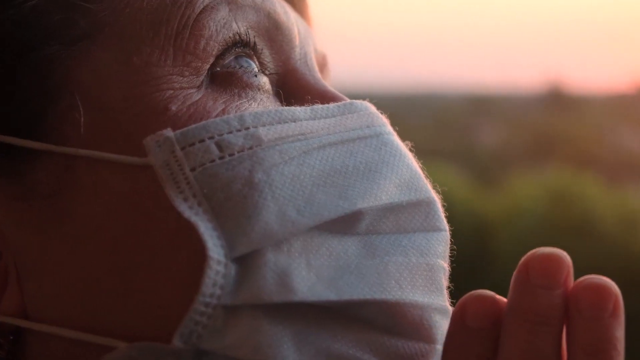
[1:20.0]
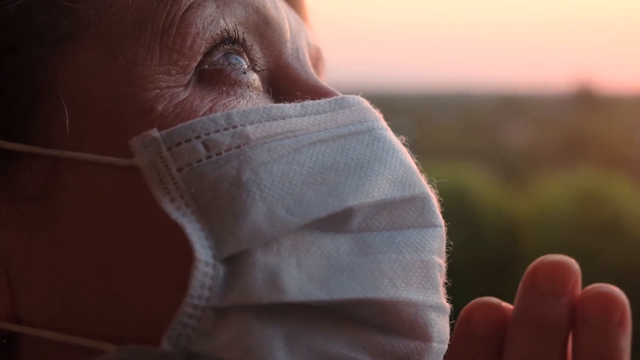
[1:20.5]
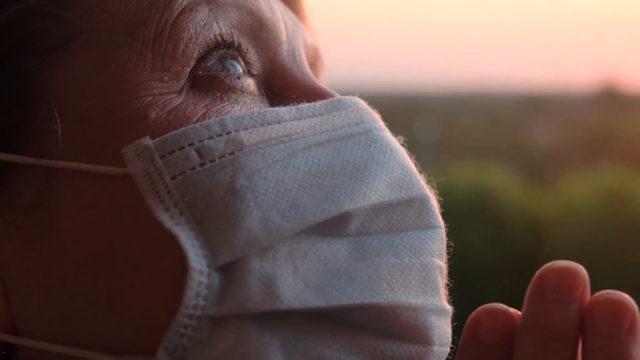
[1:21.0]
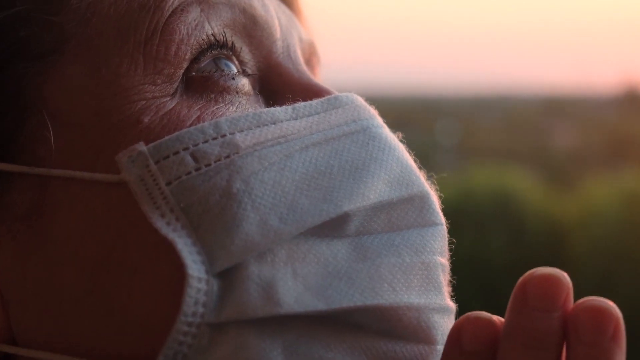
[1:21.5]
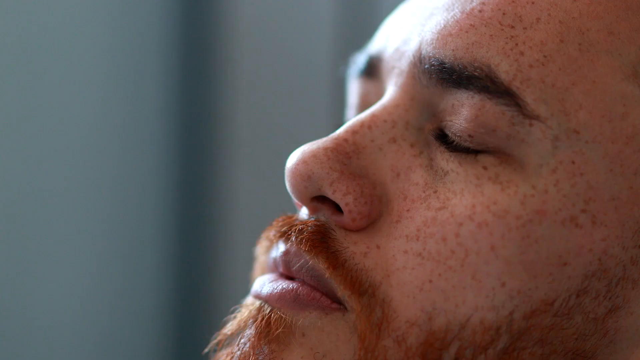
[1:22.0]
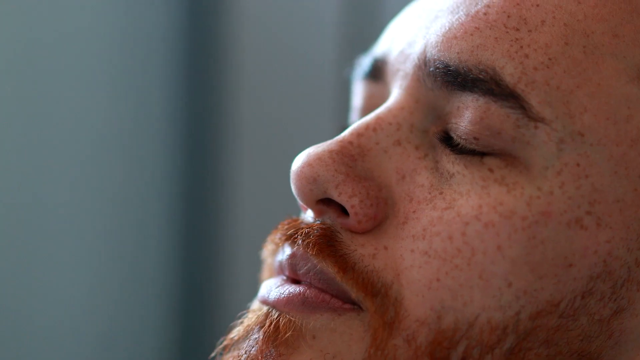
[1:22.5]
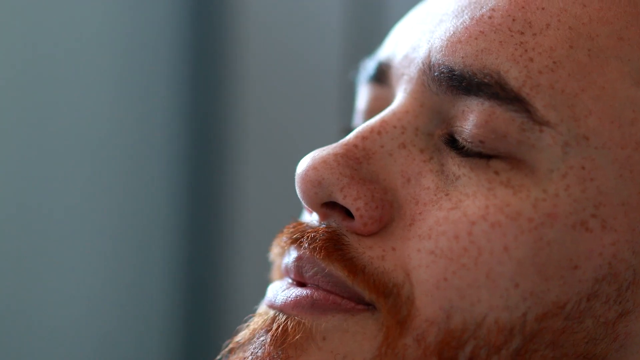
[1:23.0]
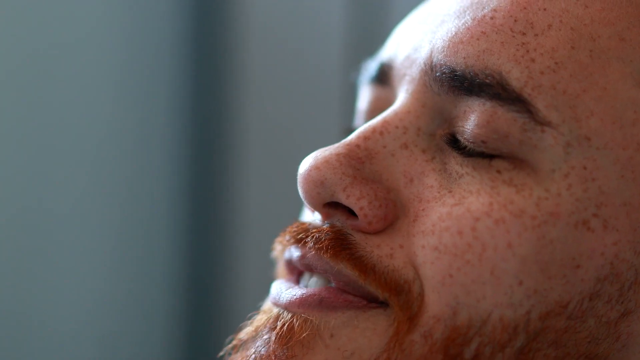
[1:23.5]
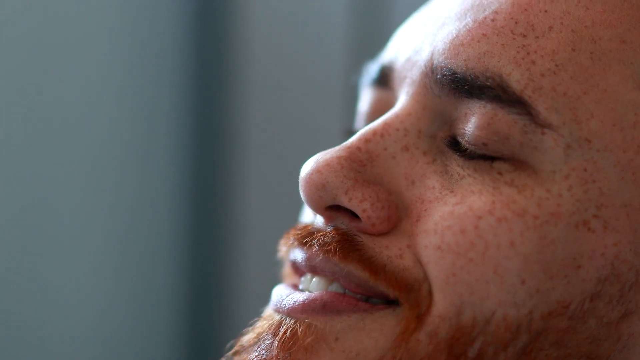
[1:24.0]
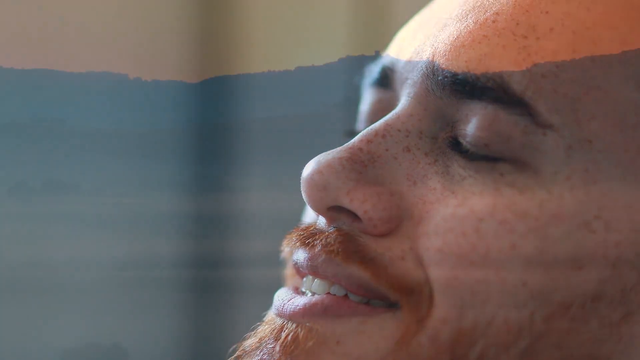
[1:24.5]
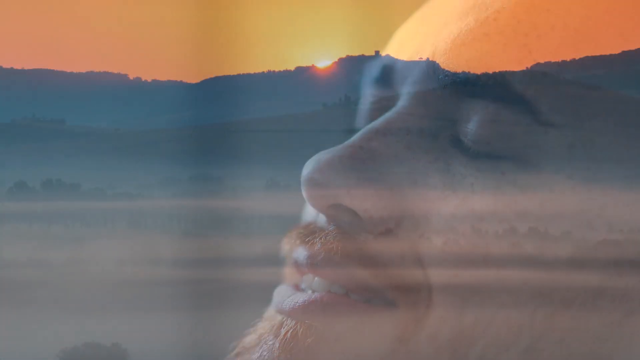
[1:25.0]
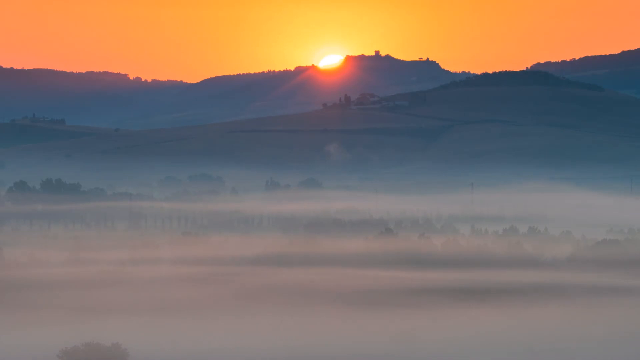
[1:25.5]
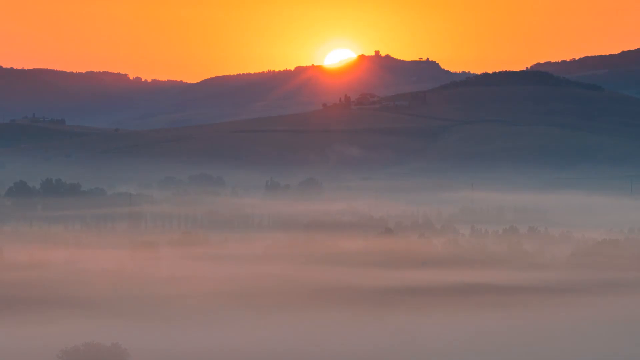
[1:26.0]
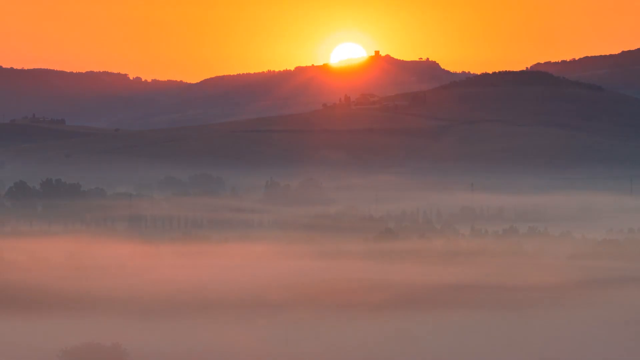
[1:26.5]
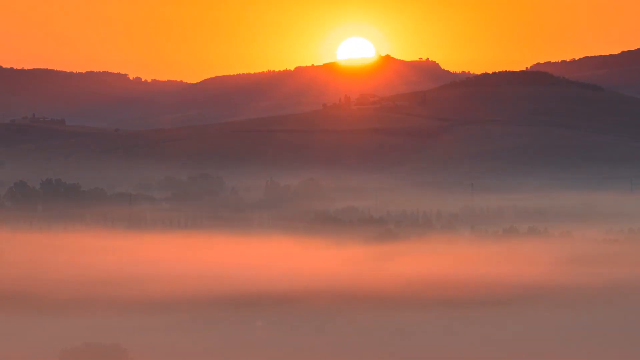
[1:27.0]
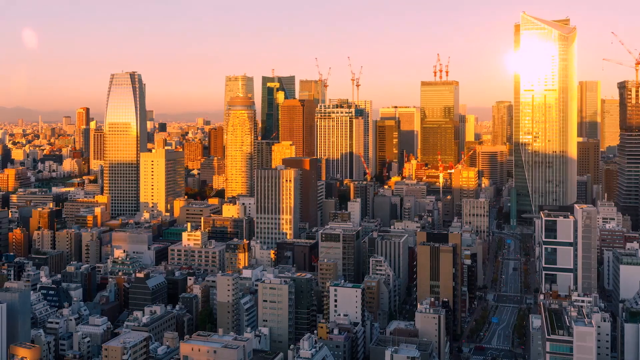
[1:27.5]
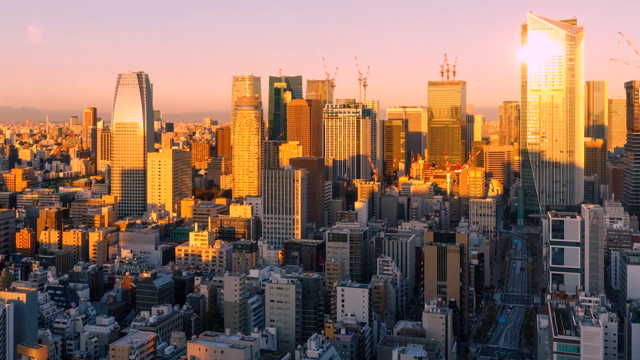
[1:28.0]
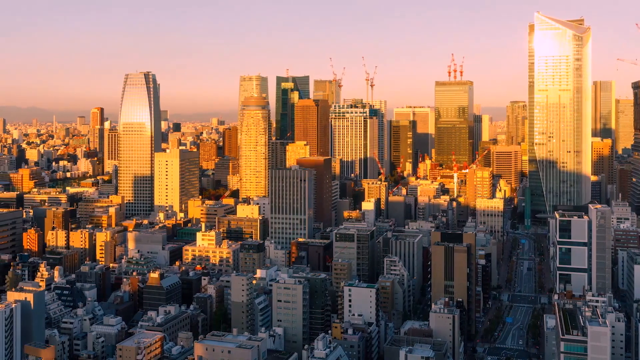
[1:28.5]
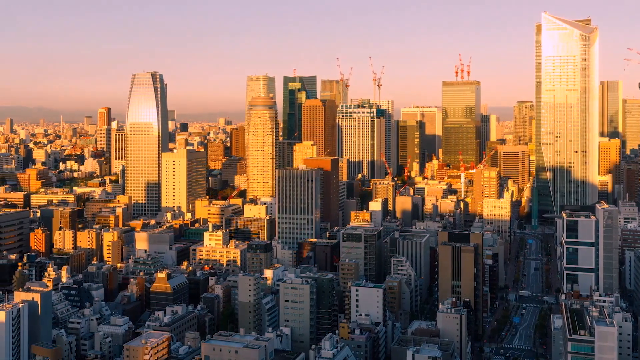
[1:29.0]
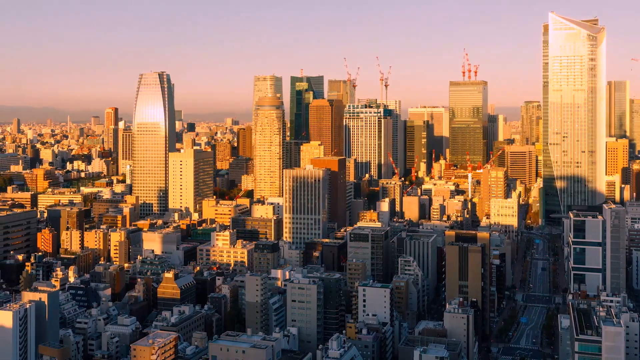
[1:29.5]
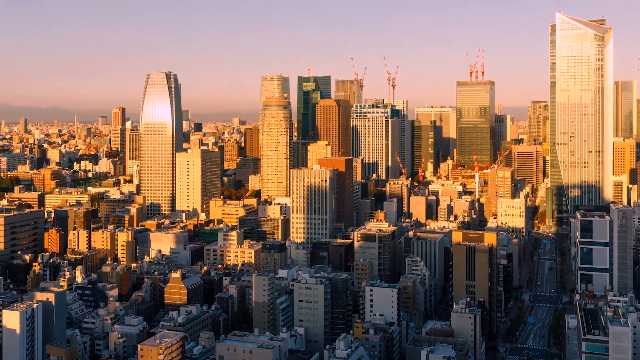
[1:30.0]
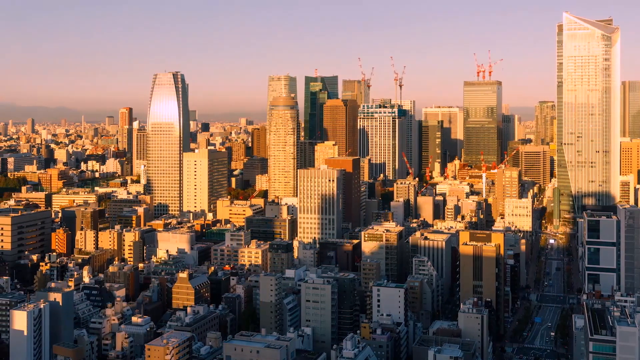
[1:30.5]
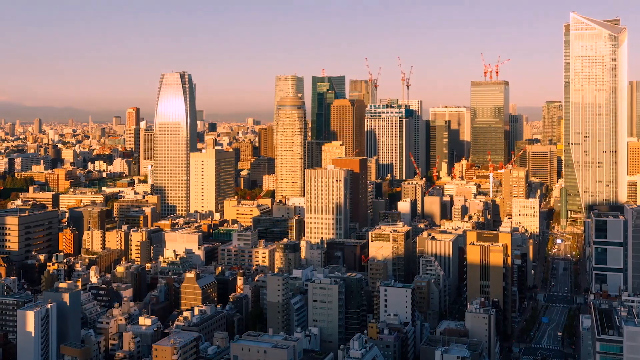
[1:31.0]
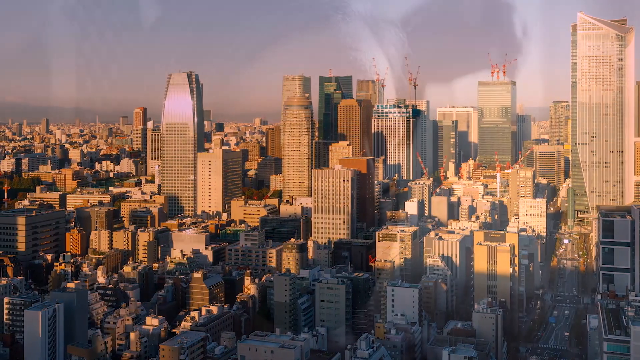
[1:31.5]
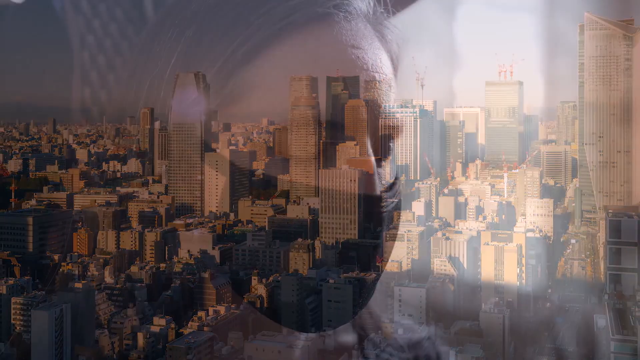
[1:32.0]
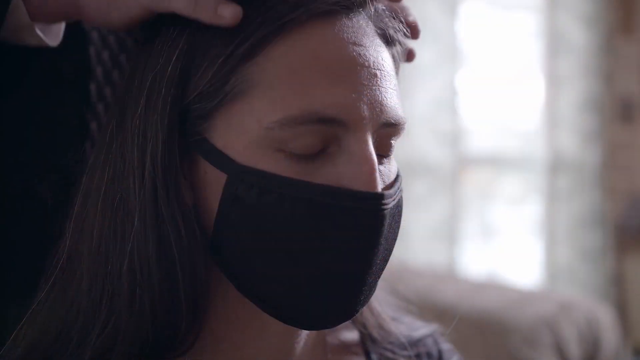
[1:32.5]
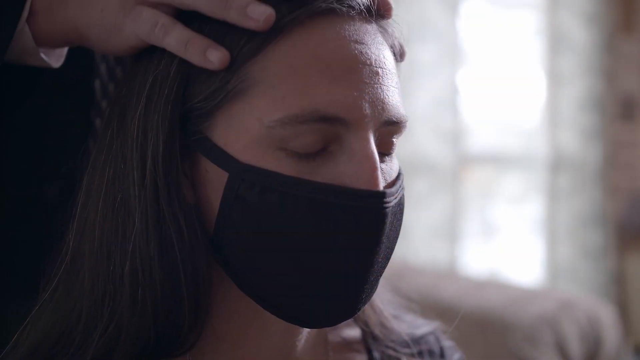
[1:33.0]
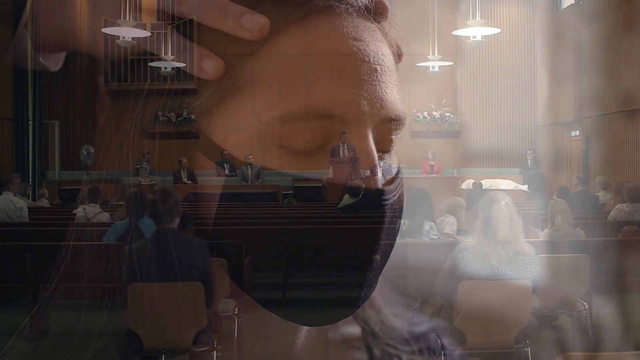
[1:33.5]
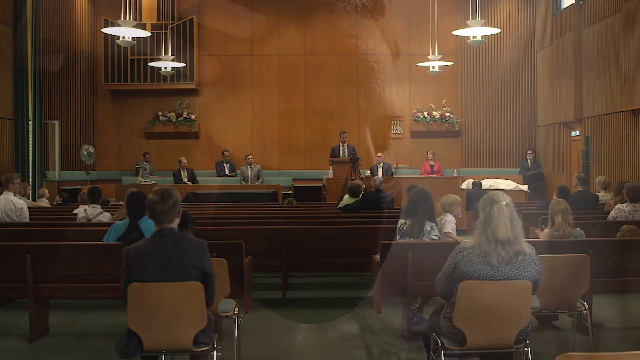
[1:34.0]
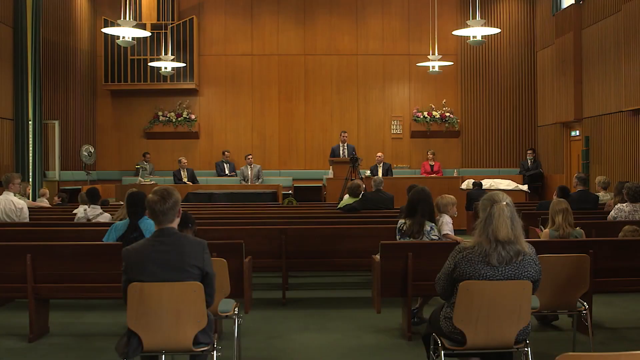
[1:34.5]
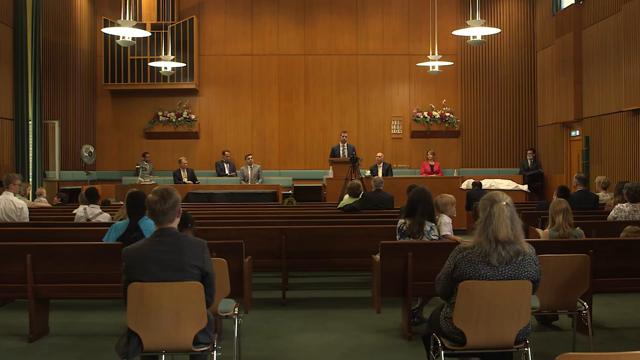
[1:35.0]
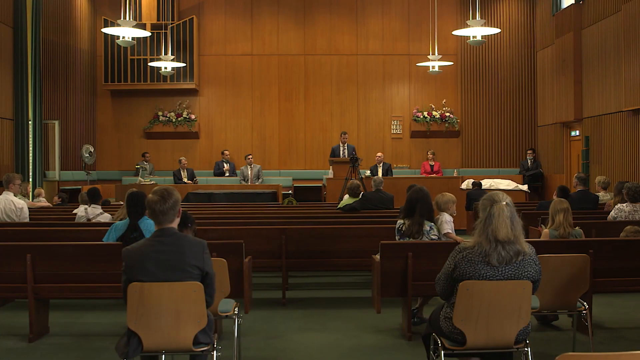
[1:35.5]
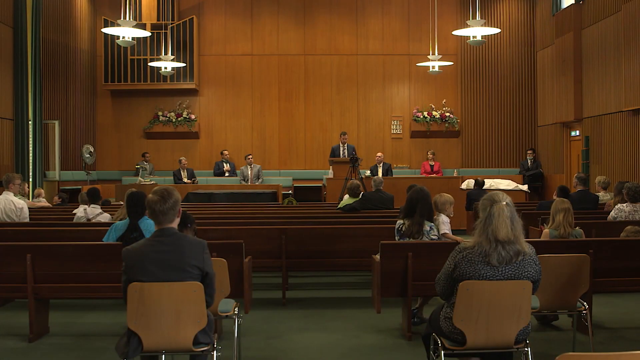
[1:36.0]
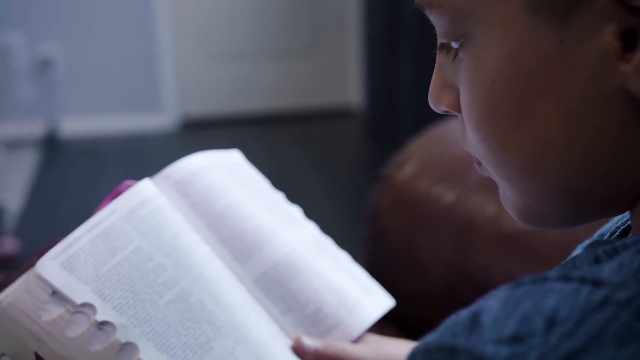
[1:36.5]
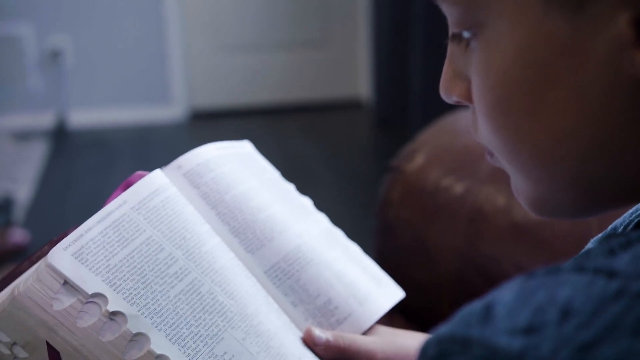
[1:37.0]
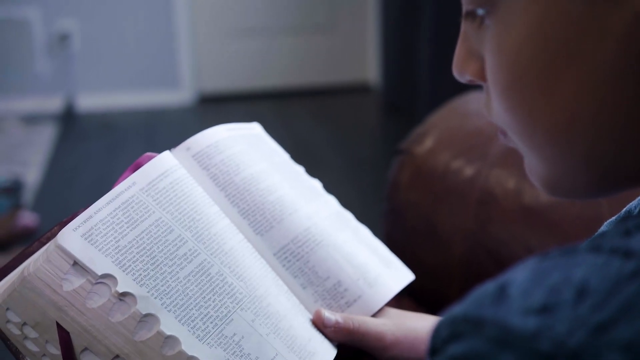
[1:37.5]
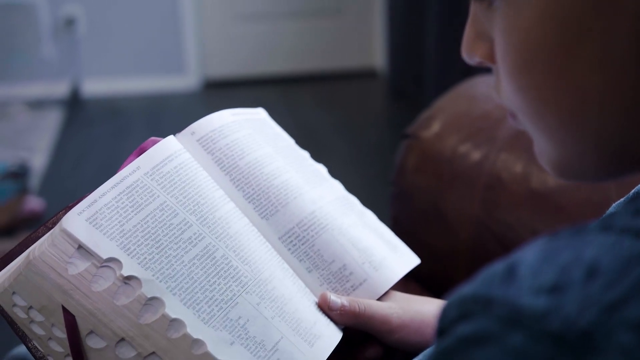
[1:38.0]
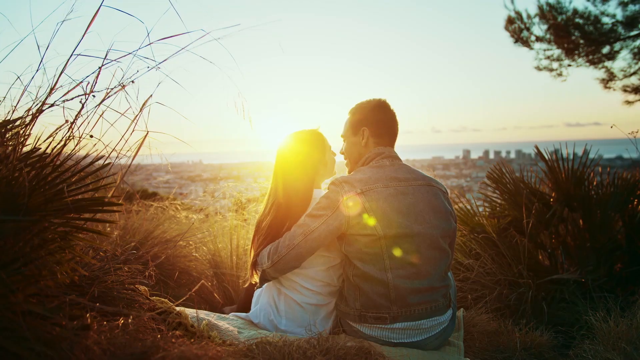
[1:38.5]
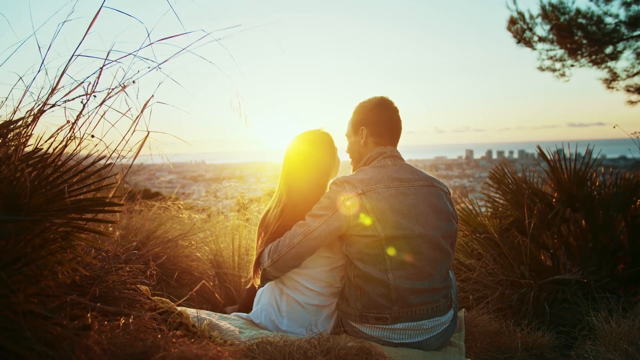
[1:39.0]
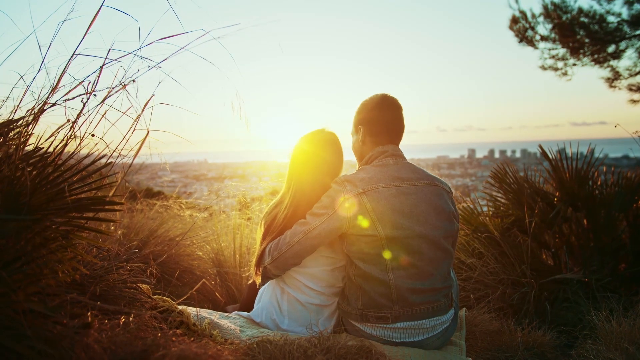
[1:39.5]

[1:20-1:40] The text "Voice of Dieter F. Uchtdorf, the Quorum of the Twelve Apostles" appears. An older woman with blue eyes, wearing a face mask, looks up at the sky outdoors and seems to be praying. A man with a very red beard, freckles, and very dark eyebrows and eyelashes smiles with his eyes closed. The sun appears above a mountain ridge that looks like it might have snow on it. The sun rises over New York City and Manhattan. A woman in a black face mask has her head caressed by someone standing behind her. A different church appears, with people spaced out, one person at the podium and other scattered people. A person reads a Bible, probably at home. A couple looks out at what appears to be a sunset, though it could be a sunrise.